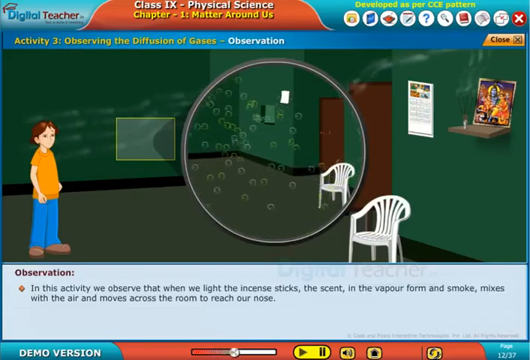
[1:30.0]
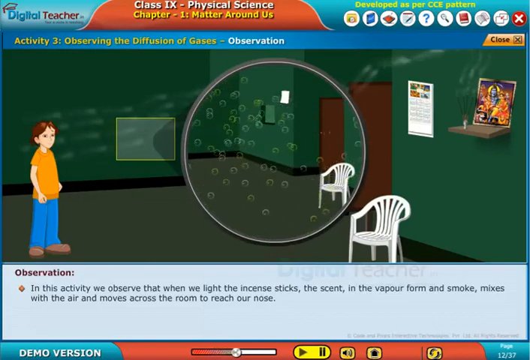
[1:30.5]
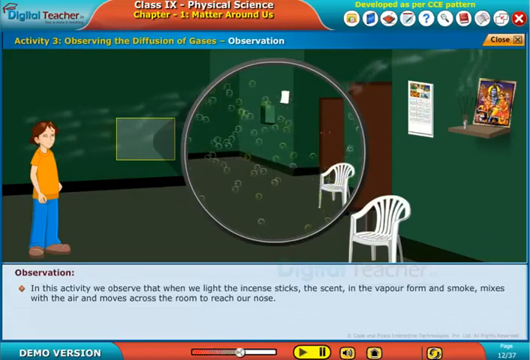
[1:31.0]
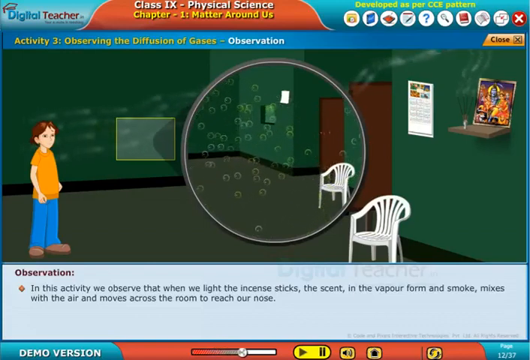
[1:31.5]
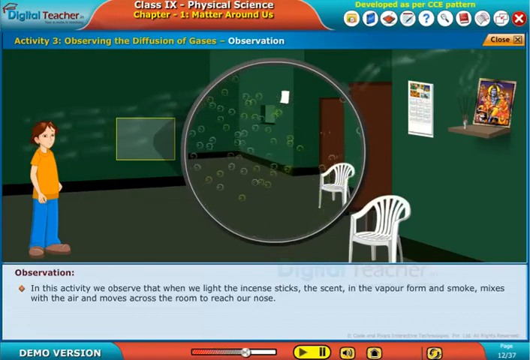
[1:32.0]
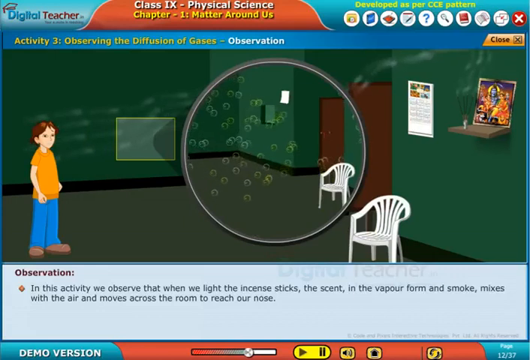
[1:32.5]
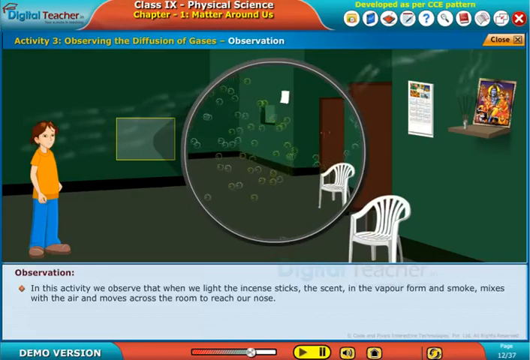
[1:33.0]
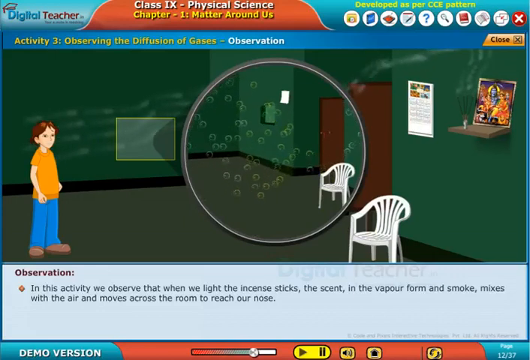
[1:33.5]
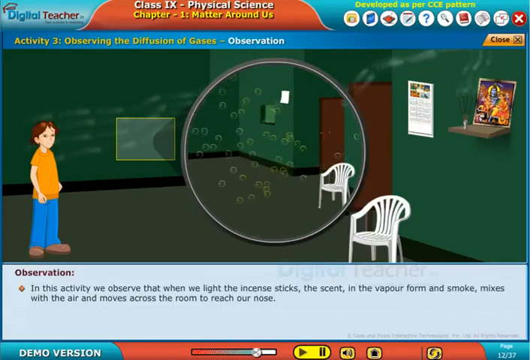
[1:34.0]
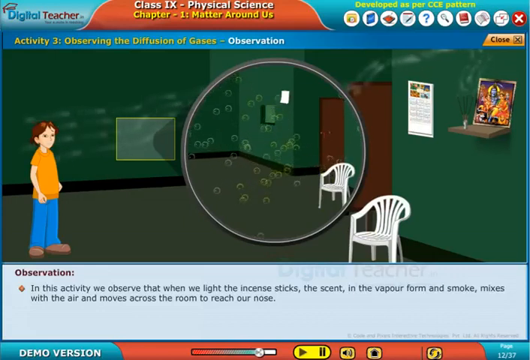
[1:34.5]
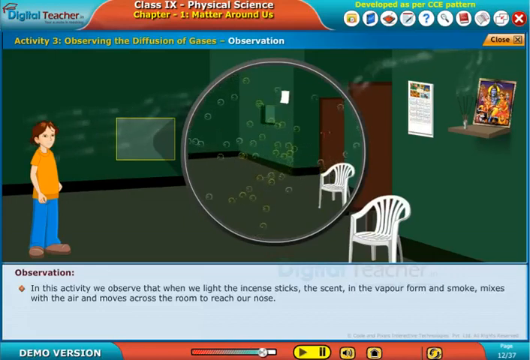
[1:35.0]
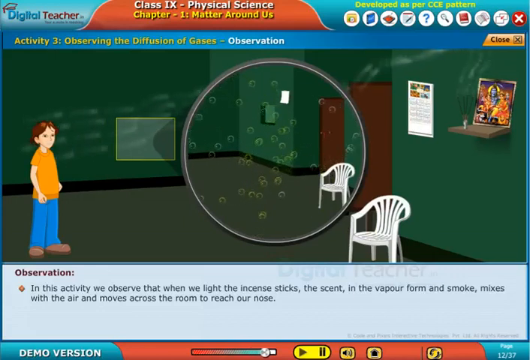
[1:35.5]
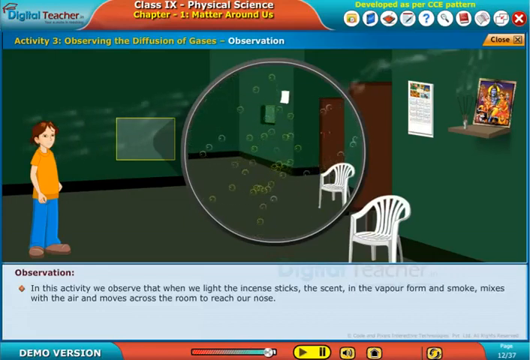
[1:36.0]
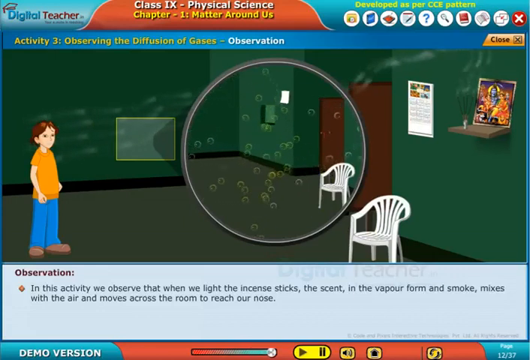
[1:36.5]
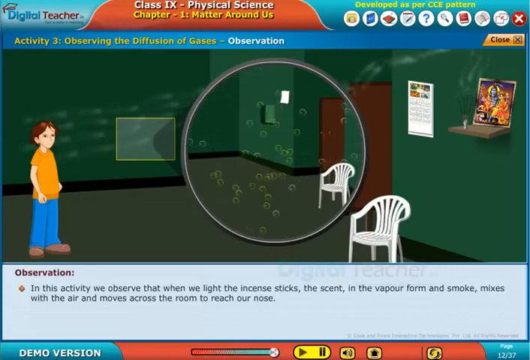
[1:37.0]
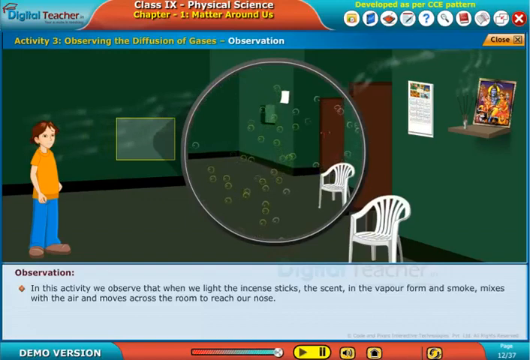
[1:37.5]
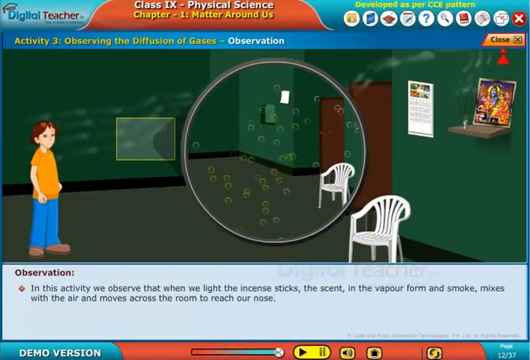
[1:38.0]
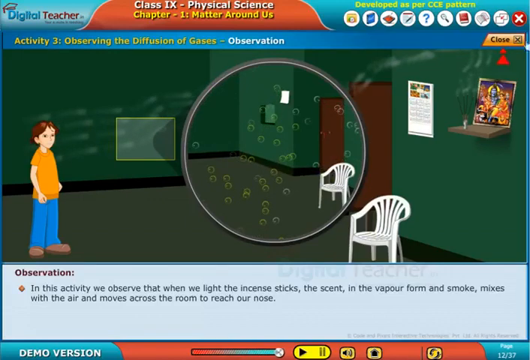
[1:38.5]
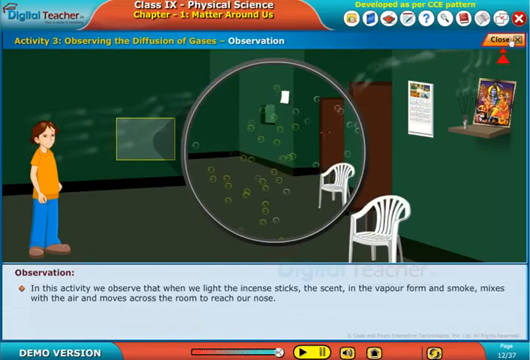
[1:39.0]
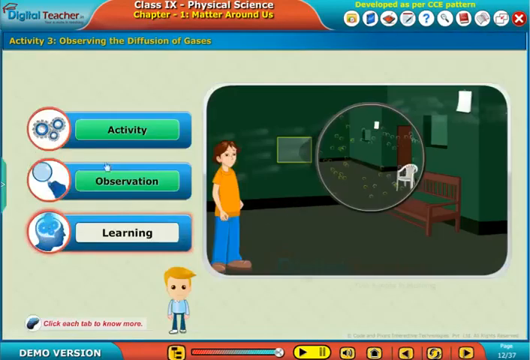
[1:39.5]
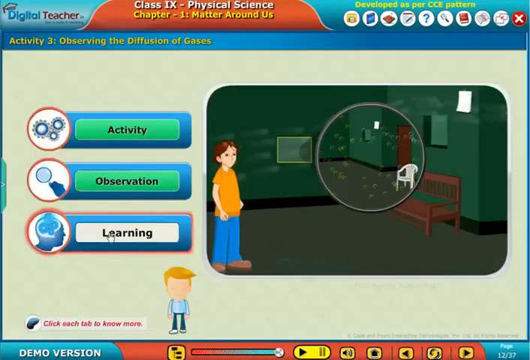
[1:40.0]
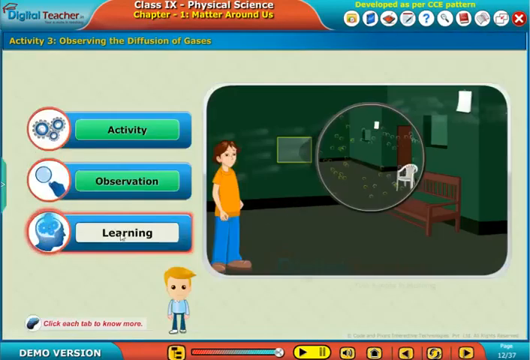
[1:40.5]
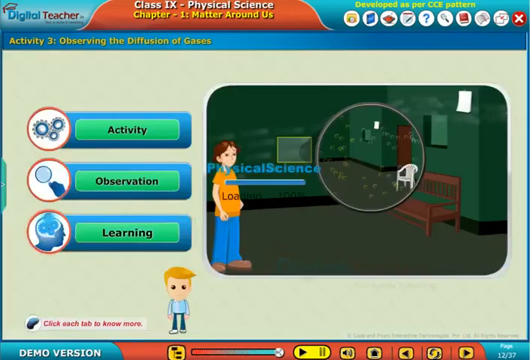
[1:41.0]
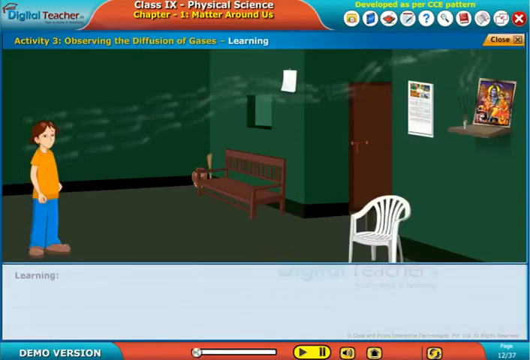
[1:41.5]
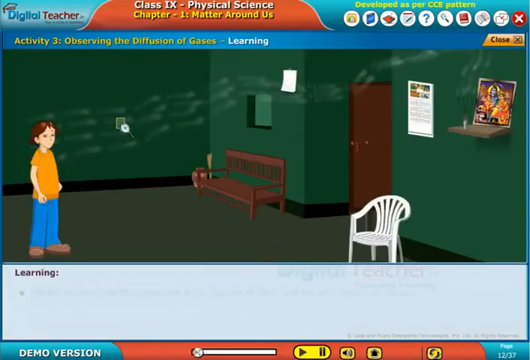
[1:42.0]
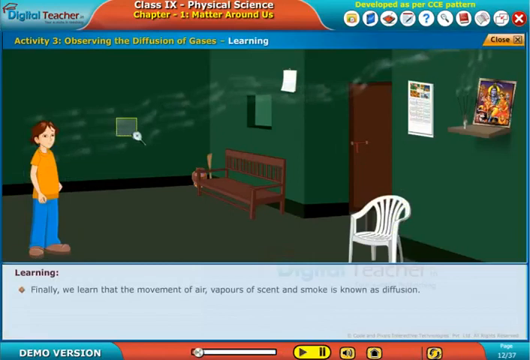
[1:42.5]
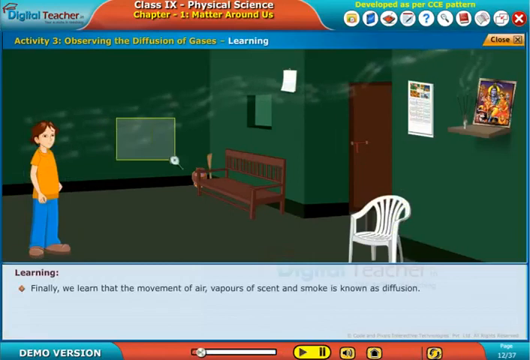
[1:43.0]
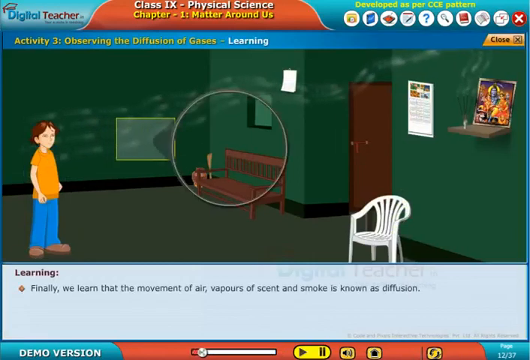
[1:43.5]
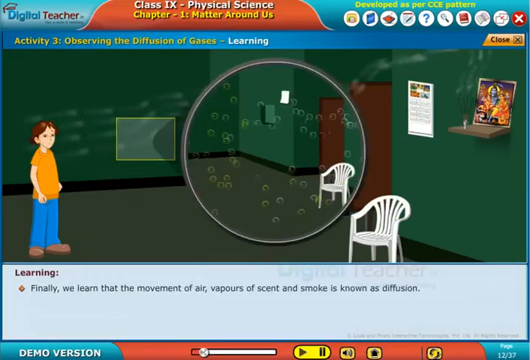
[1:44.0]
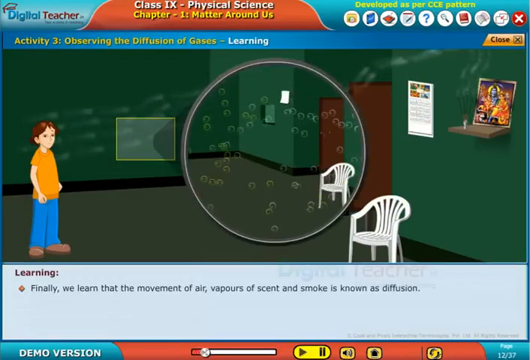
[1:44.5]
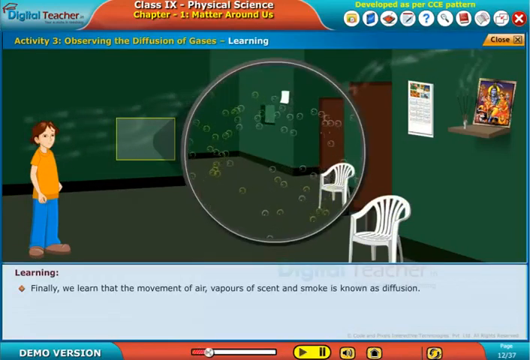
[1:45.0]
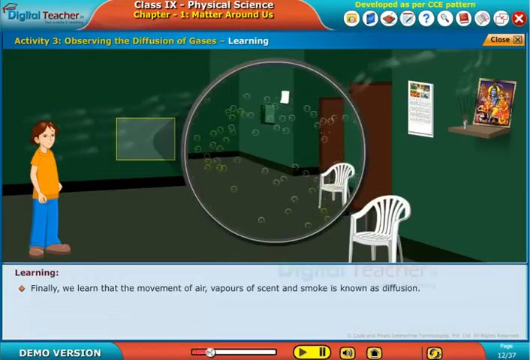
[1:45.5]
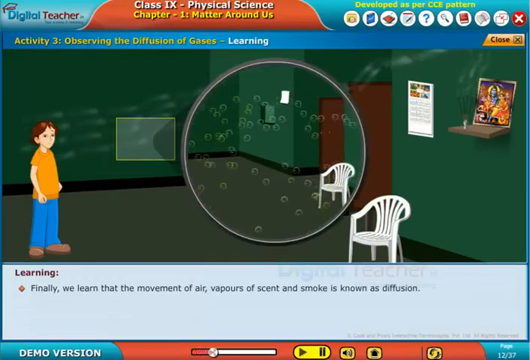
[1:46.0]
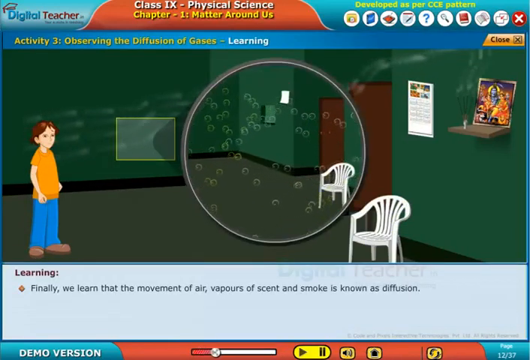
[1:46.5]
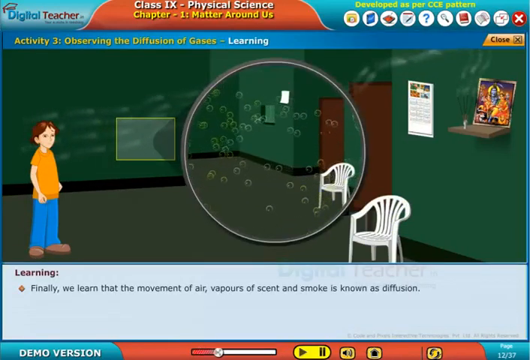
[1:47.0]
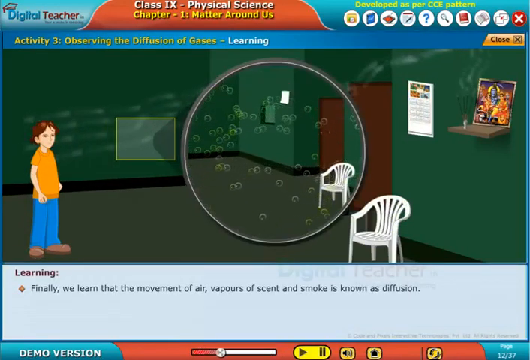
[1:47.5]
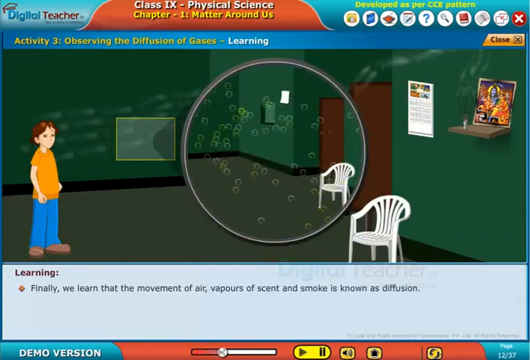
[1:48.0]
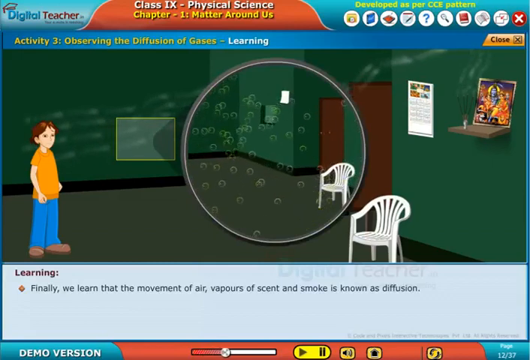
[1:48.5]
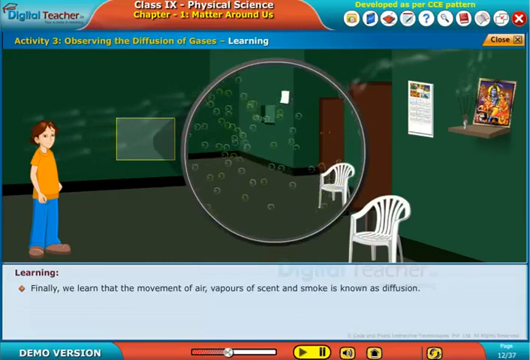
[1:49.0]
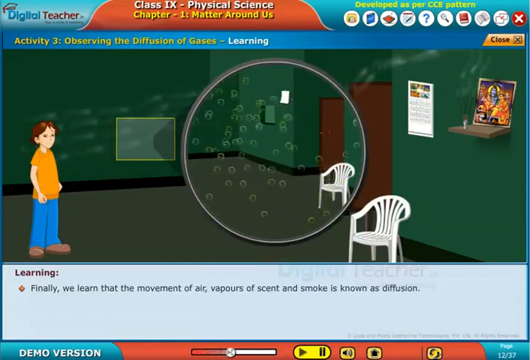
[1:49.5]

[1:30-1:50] The walls and the floor are green, and two white chairs are visible. In the centre of the video is a round circle with floating bubbles. On the right side is a shelf with four incense sticks, and smoke comes from there going straight to the standing person. A calendar hangs on the wall next to the shelf. At the top is written "observation," with the same text on the right-hand side, where the tab can be closed. At the bottom the text reads "observation, in this activity we observe when we light incense sticks," continuing that the scent and smoke "mixes with the air and move across to a room to reach our nose." A light green square is on the wall.